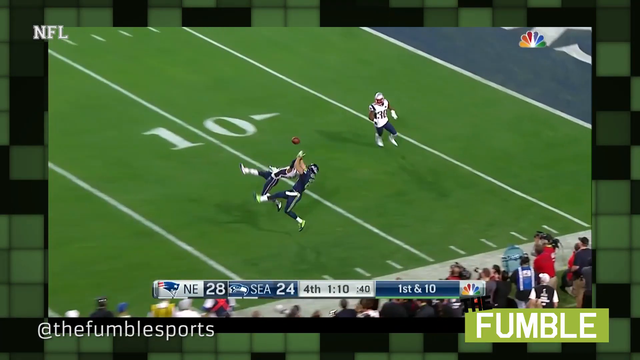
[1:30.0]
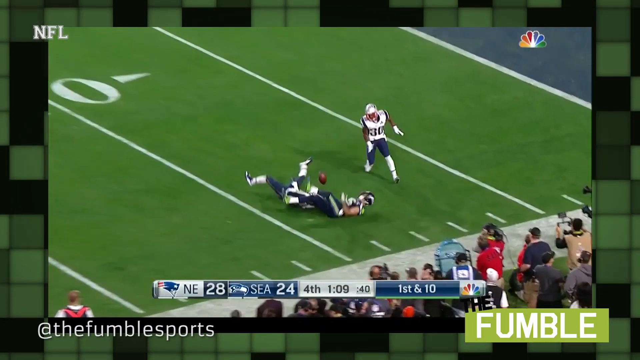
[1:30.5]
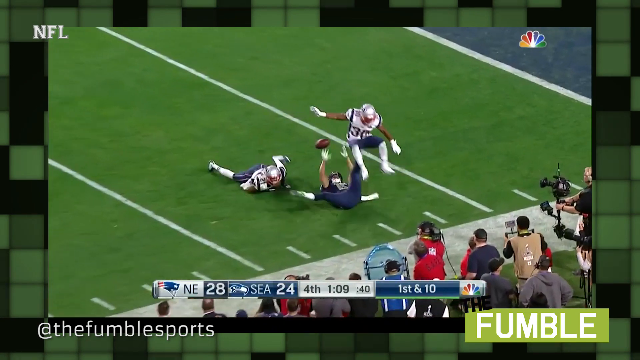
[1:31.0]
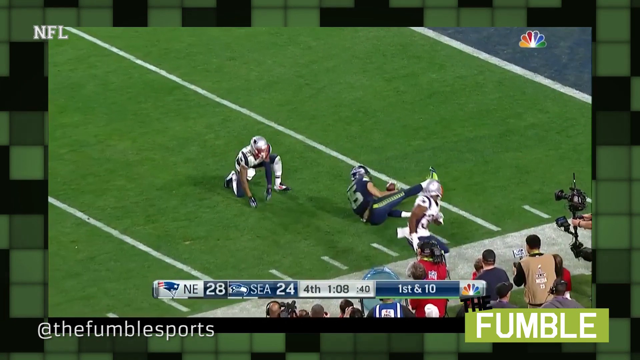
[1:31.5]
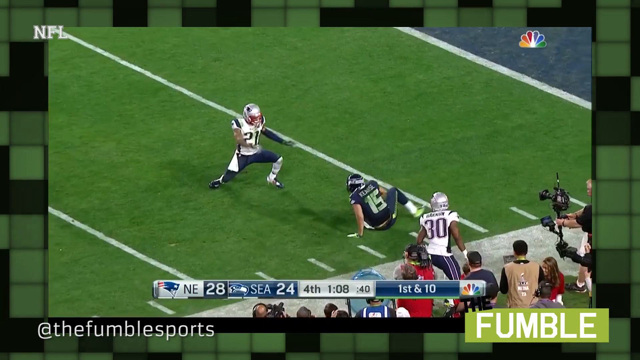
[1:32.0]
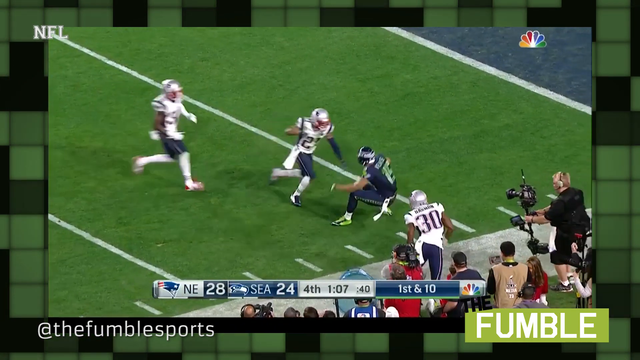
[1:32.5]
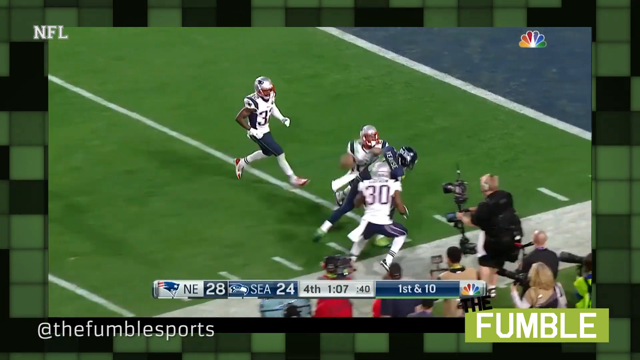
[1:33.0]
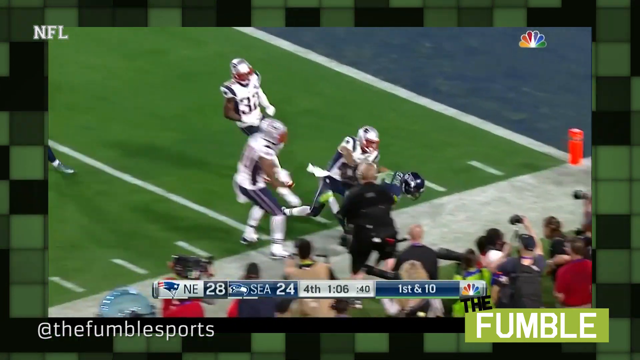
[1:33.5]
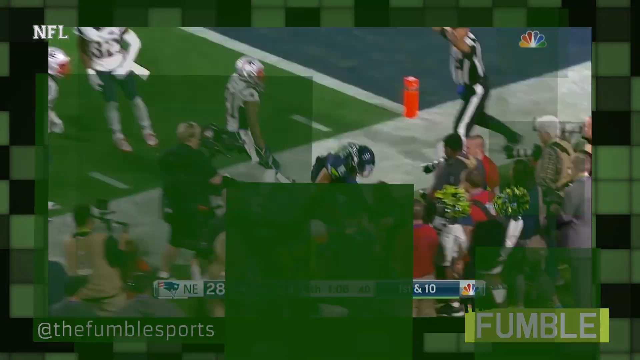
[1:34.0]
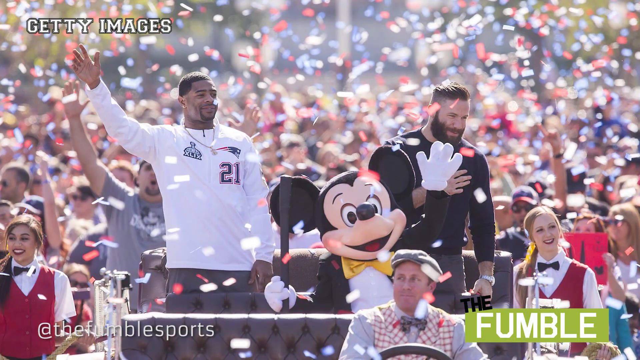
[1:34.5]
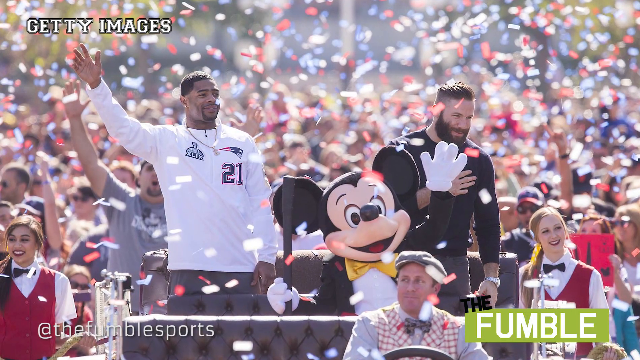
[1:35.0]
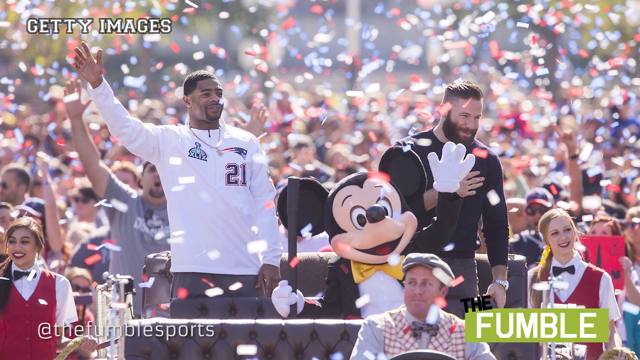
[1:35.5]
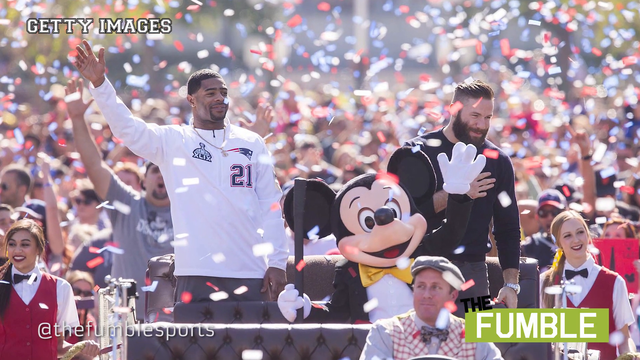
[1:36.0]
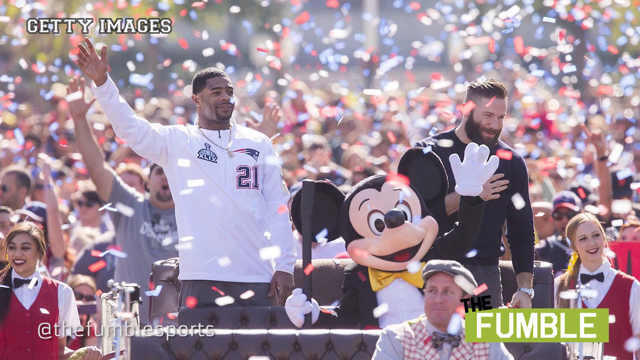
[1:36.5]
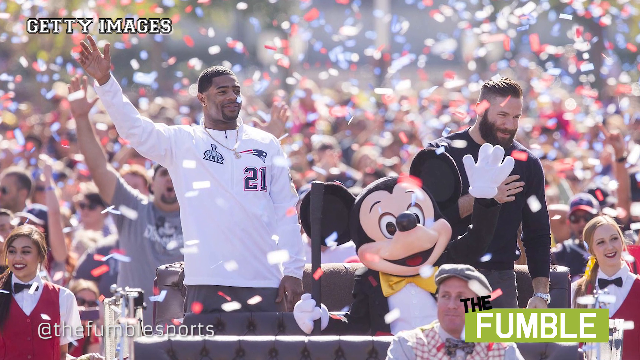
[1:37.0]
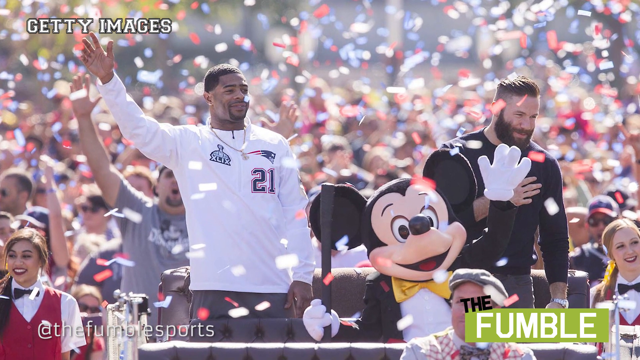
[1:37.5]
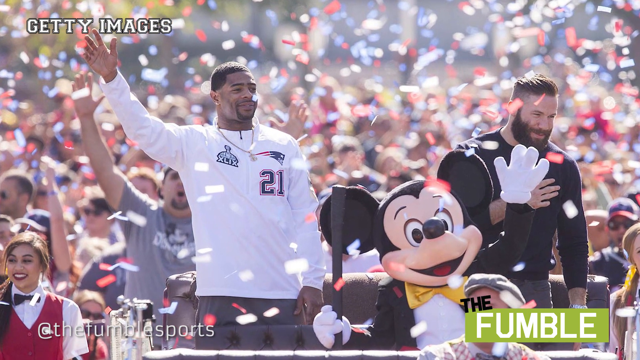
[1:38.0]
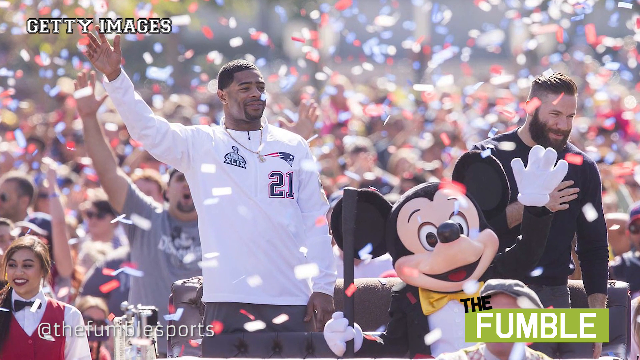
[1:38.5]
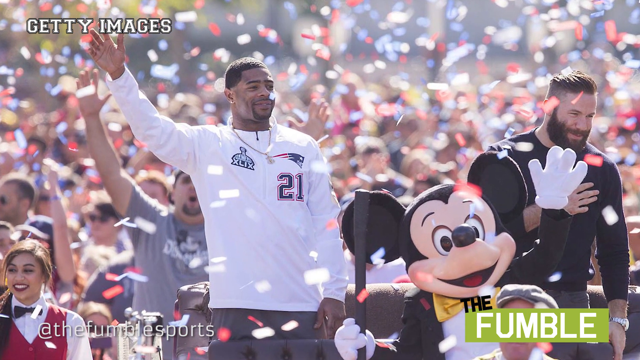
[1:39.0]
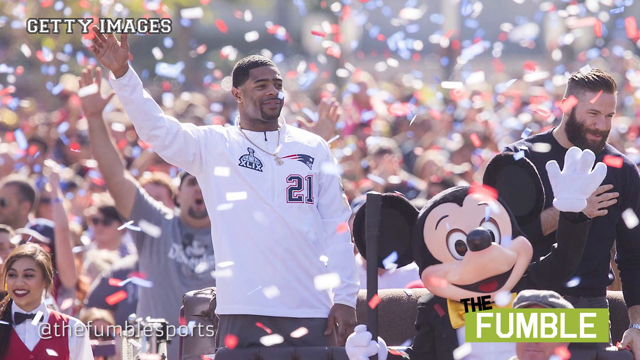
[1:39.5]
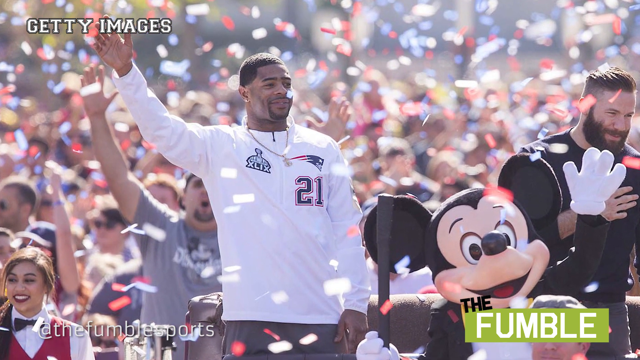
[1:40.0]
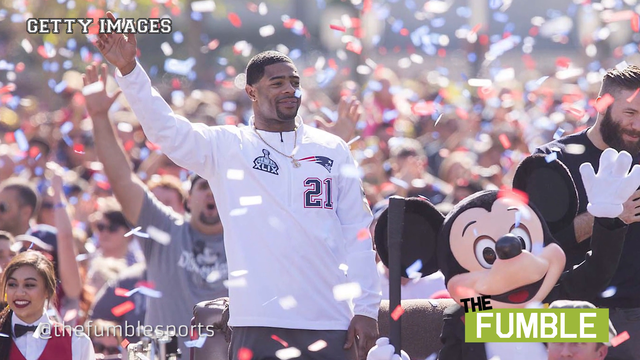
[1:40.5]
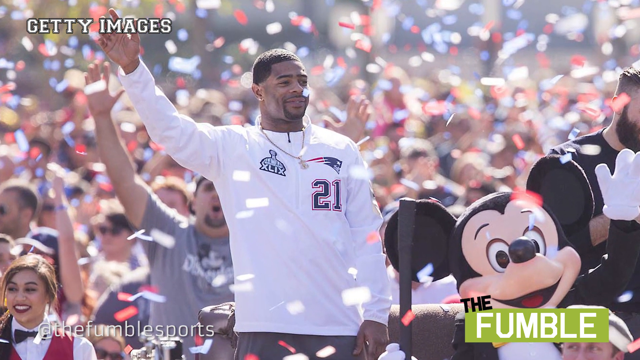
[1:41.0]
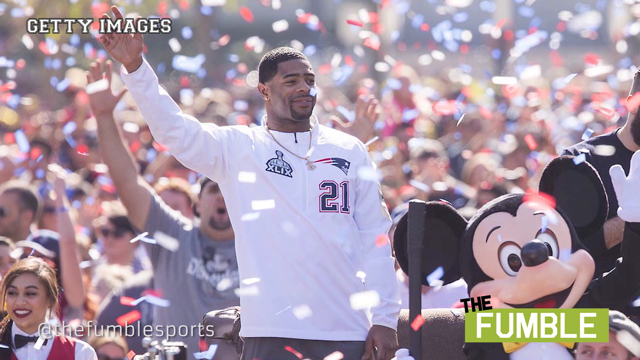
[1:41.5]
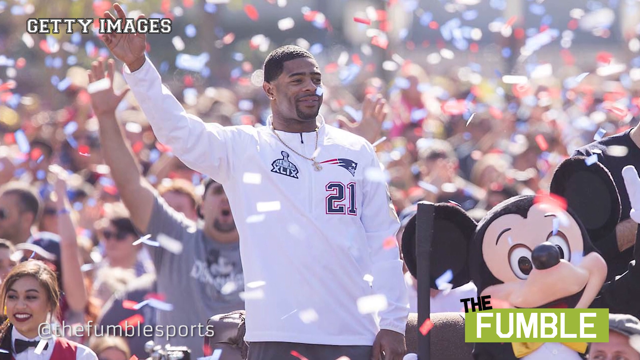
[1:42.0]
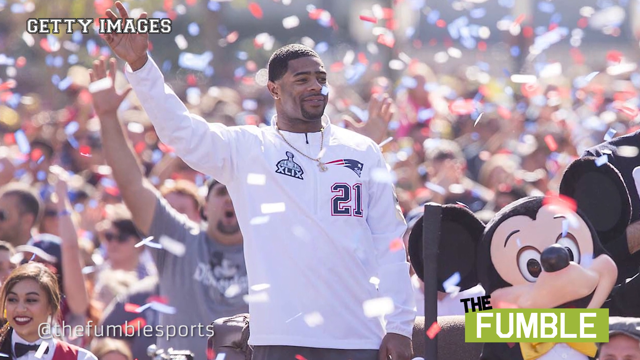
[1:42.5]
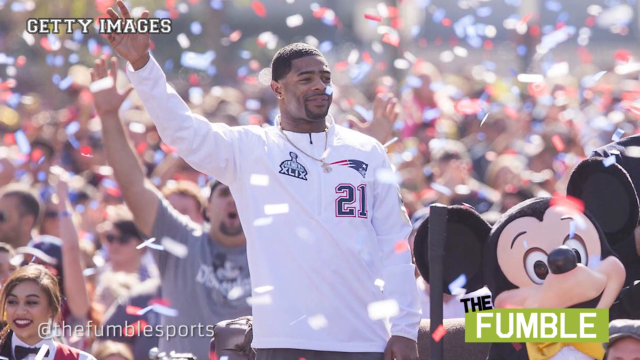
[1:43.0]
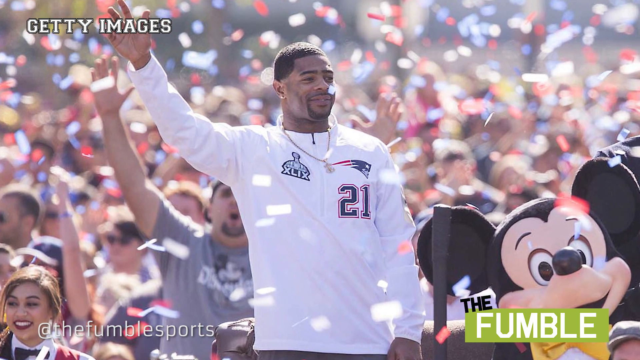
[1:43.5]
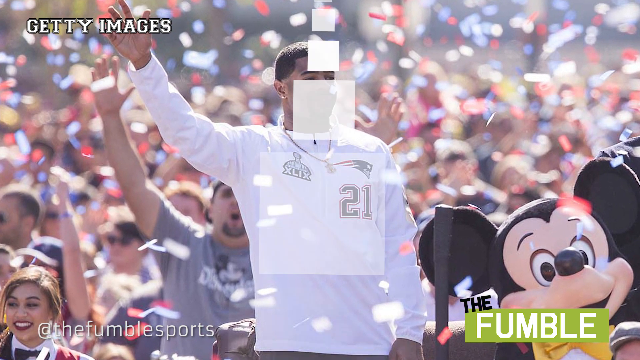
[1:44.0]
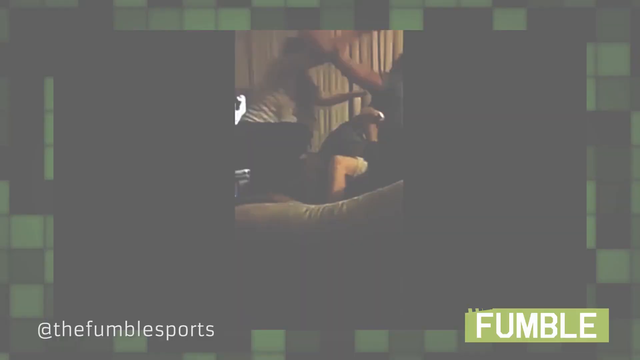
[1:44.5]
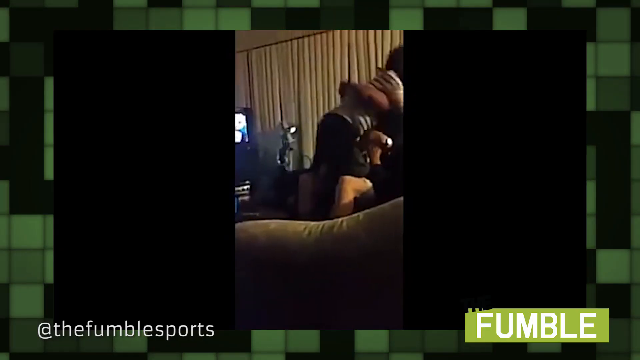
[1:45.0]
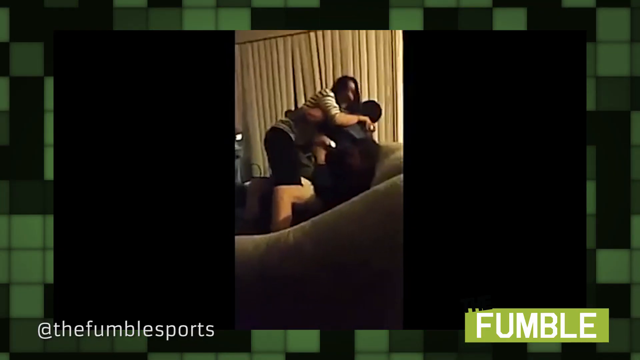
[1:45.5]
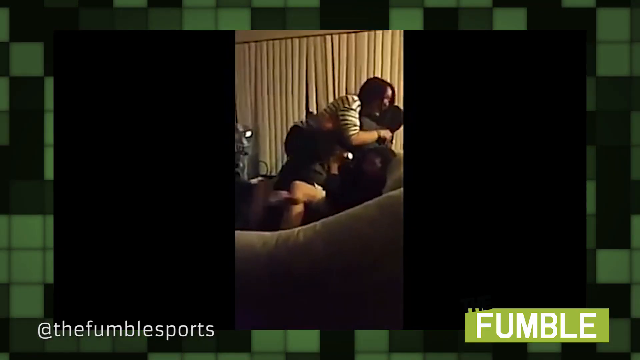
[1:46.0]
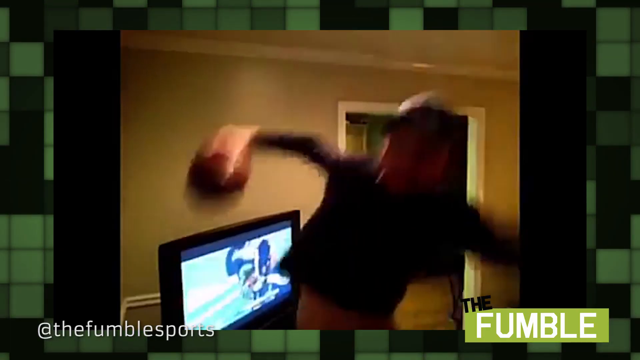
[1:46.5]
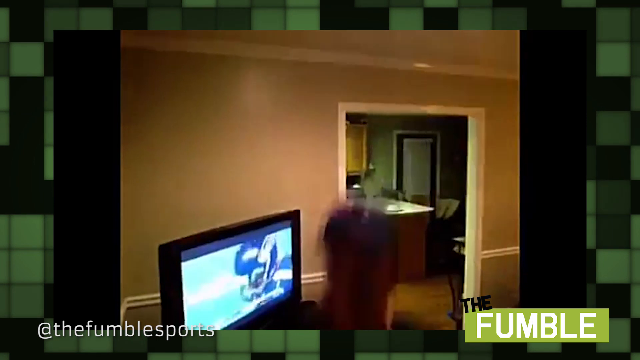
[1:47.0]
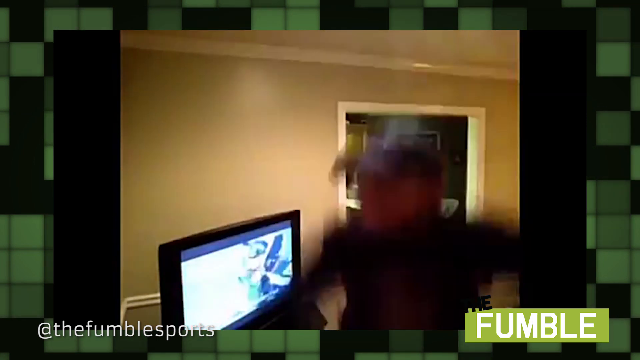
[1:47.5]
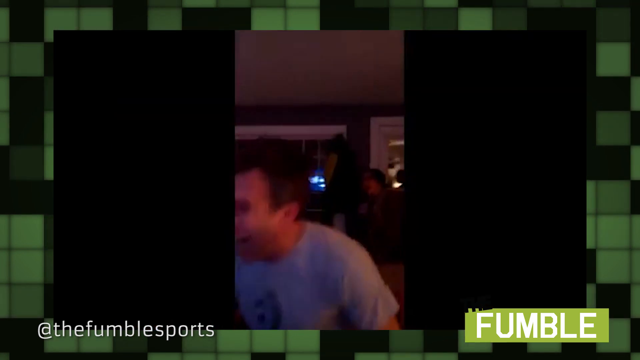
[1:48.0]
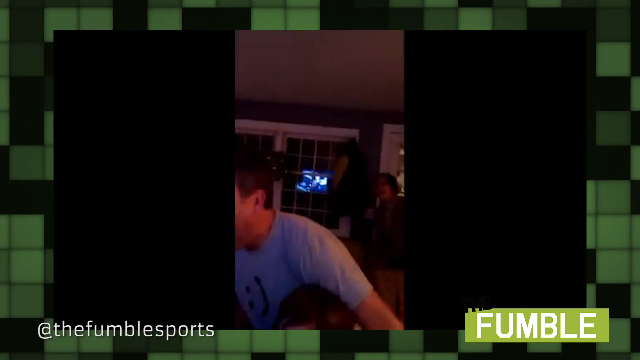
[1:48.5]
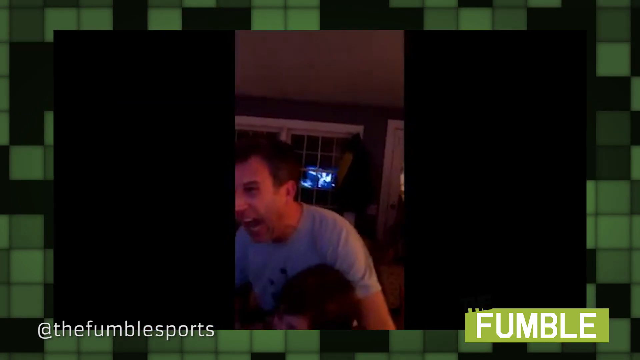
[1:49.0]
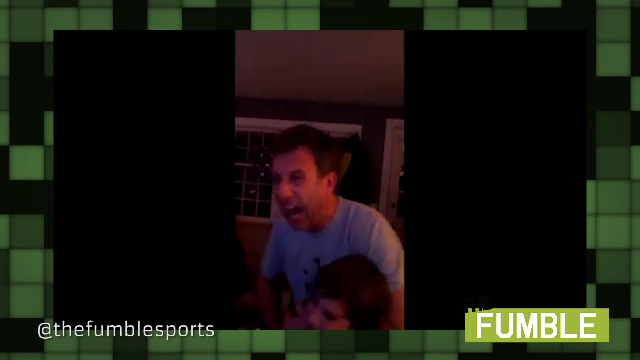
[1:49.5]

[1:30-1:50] A pass between the Seattle Seahawks and New England Patriots is broken up. The score below reads New England 28, Seahawks 24, with a minute and nine seconds to go in the fourth quarter. It is first and 10 as the Seahawks player tries to catch the ball and run out of bounds. A new image shows the Patriots player wearing a shirt with 21 on it, his right hand in the air, with lots of confetti behind him, a Mickey Mouse doll in front, and another man standing to his right side. The camera zooms in on the player wearing 21. New footage appears to show two people hugging: one person is sitting on the couch, and what looks like a woman jumps on top of him. Next, a person who appears to be a child jumps up and down, with a TV showing the game in the background. Then a man yells with enthusiasm while hugging his child.